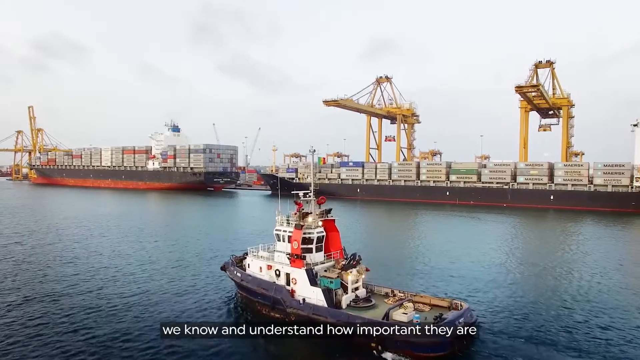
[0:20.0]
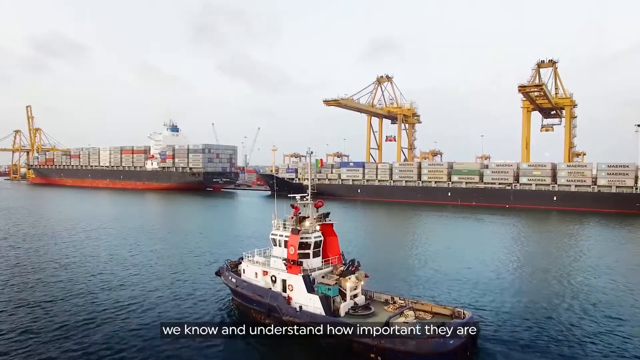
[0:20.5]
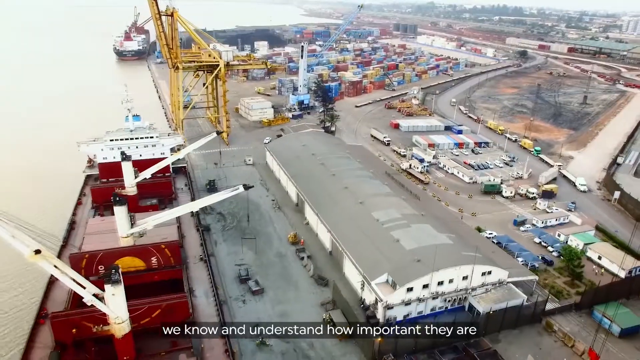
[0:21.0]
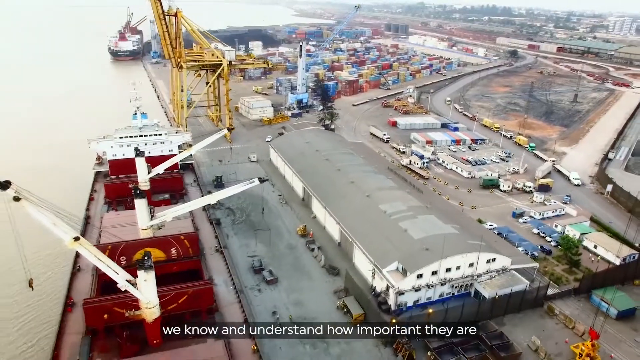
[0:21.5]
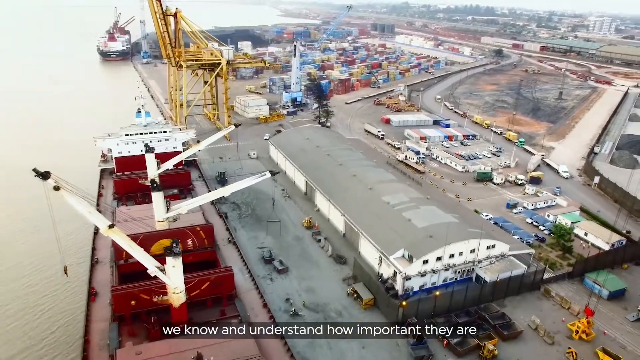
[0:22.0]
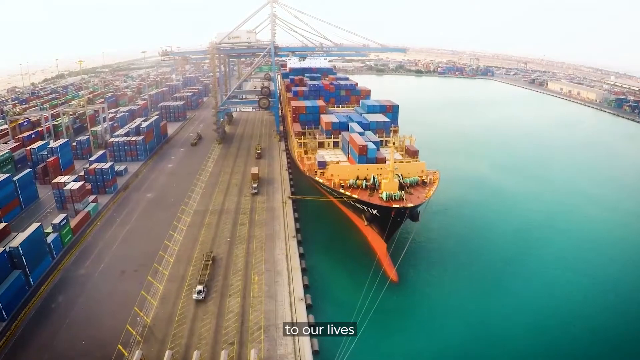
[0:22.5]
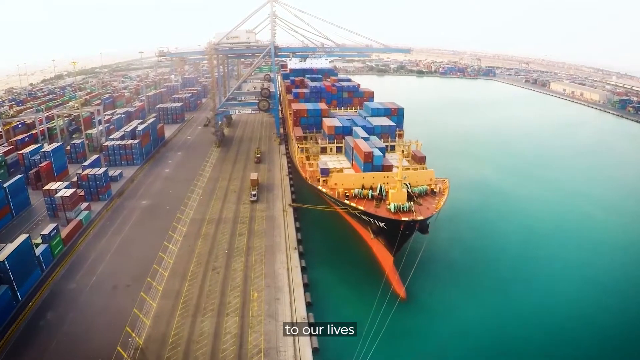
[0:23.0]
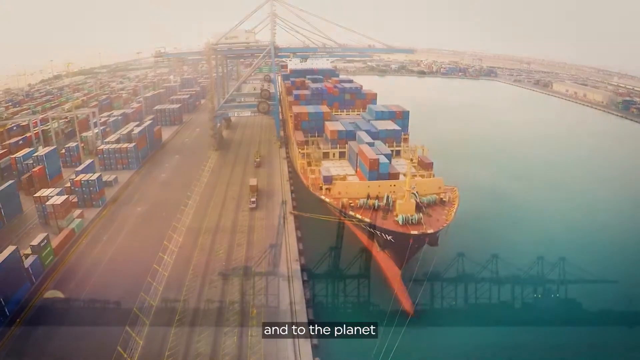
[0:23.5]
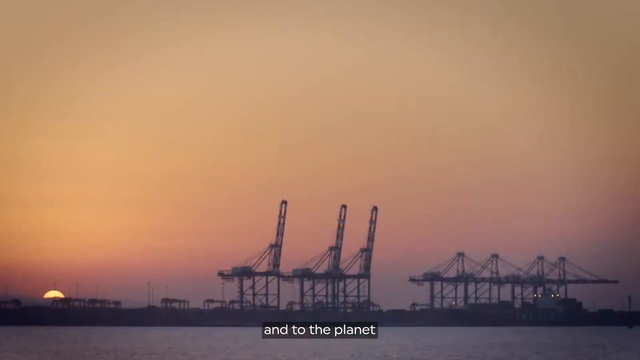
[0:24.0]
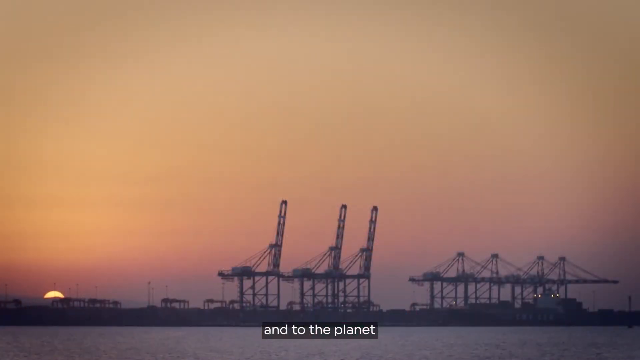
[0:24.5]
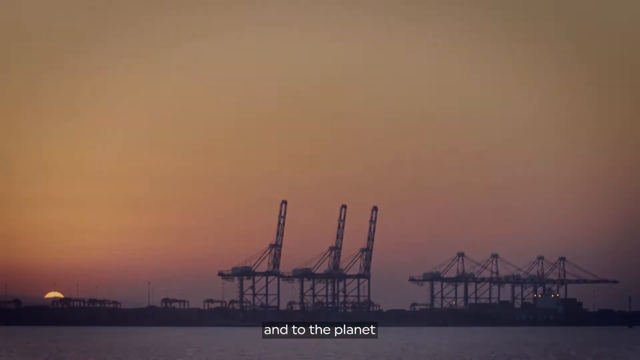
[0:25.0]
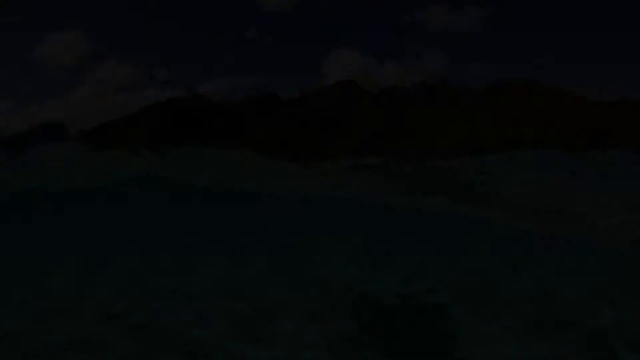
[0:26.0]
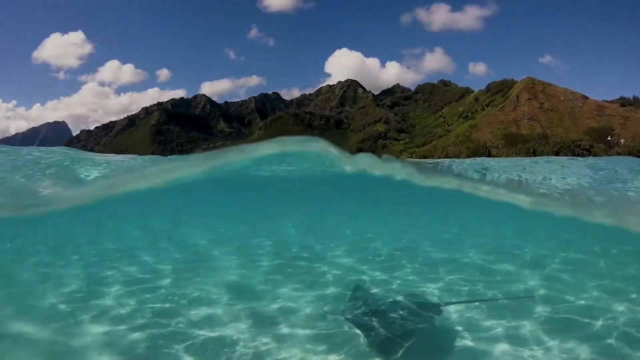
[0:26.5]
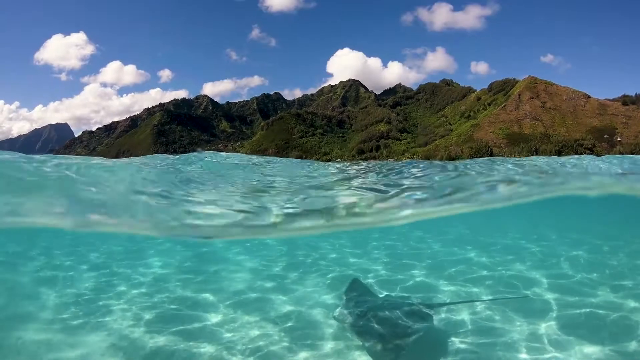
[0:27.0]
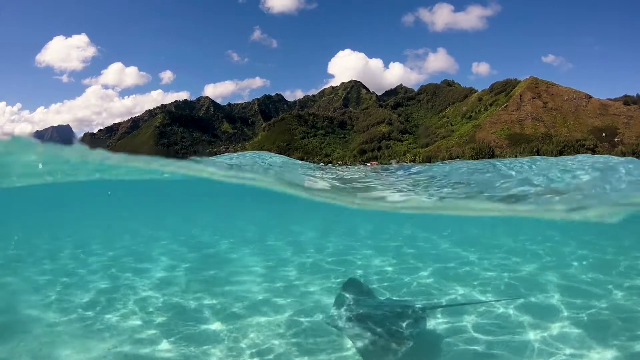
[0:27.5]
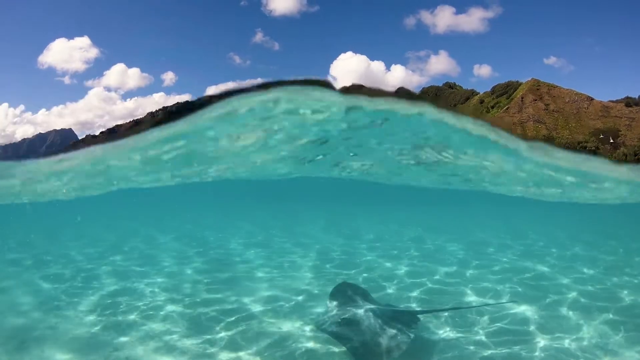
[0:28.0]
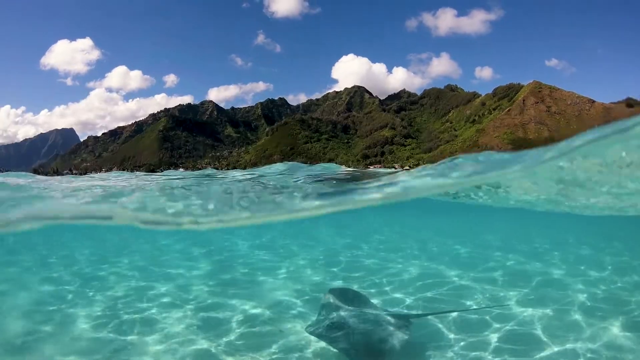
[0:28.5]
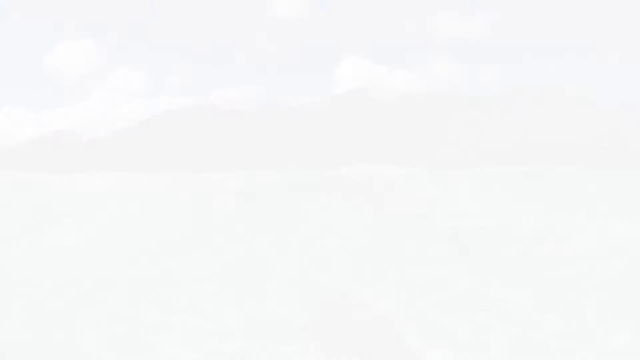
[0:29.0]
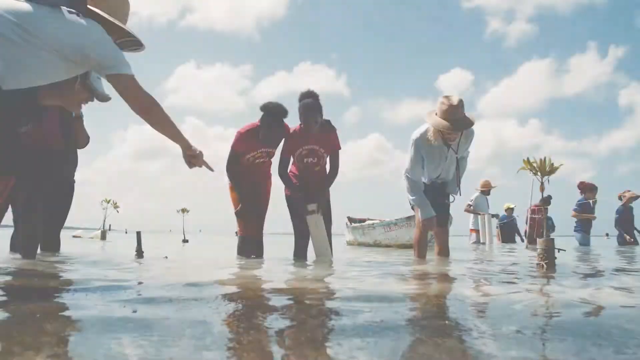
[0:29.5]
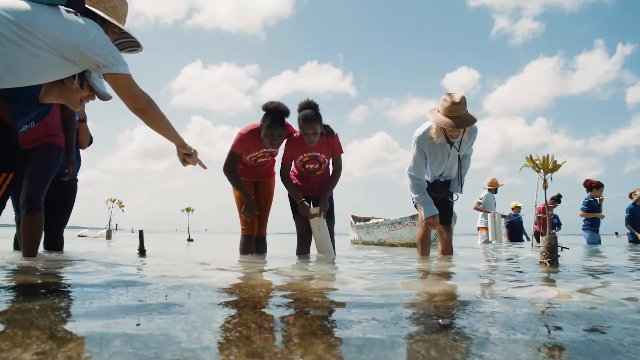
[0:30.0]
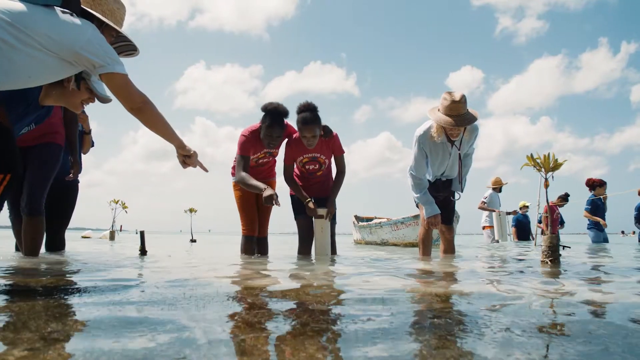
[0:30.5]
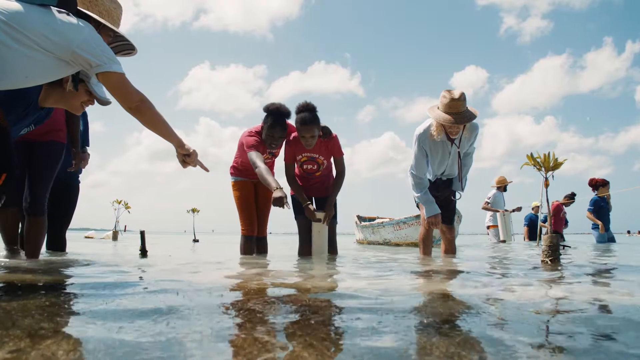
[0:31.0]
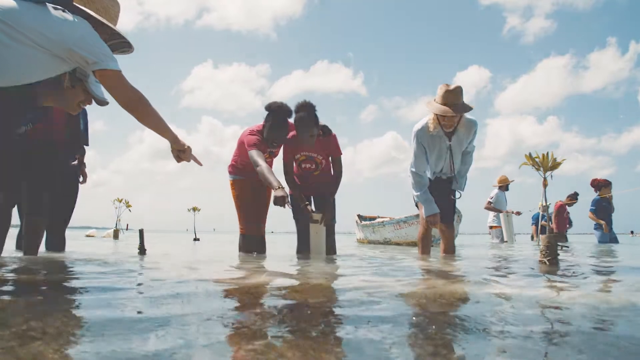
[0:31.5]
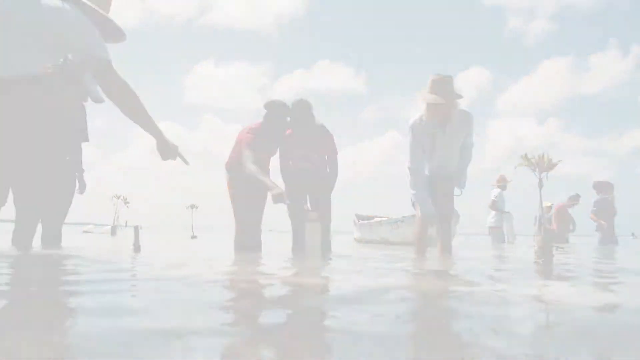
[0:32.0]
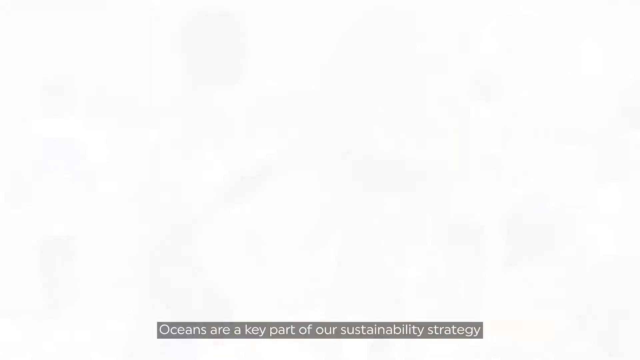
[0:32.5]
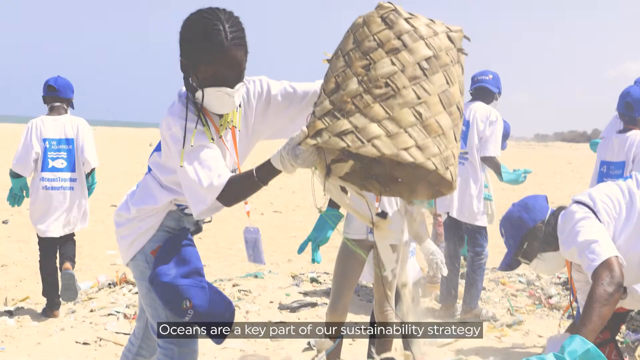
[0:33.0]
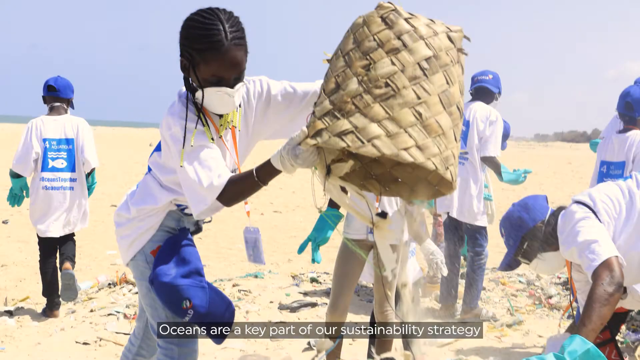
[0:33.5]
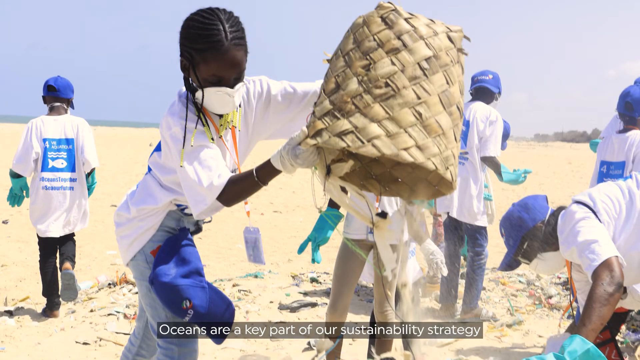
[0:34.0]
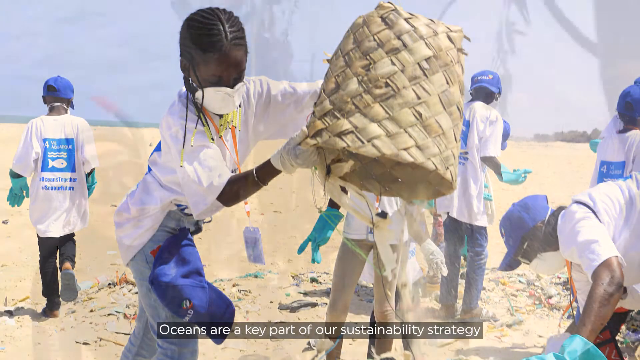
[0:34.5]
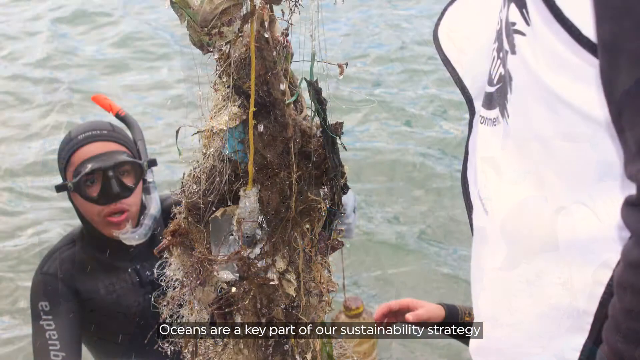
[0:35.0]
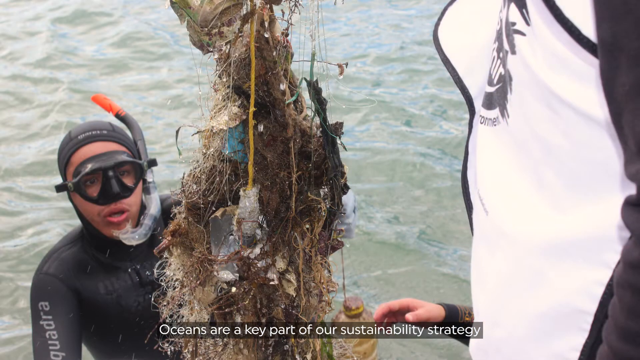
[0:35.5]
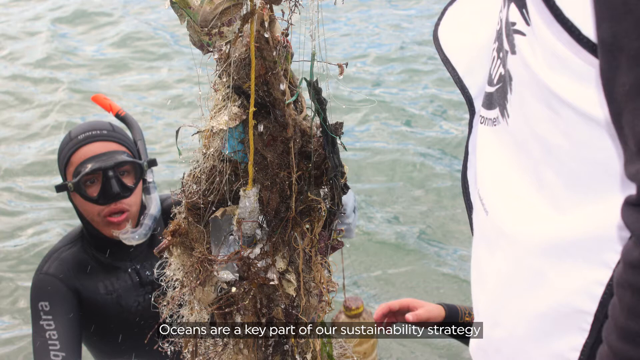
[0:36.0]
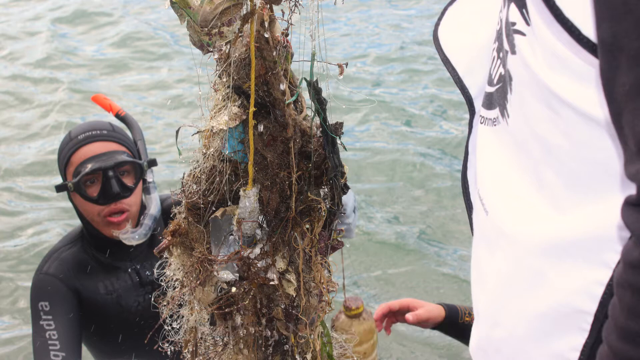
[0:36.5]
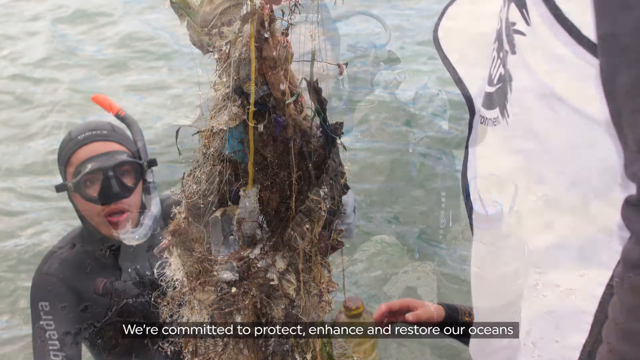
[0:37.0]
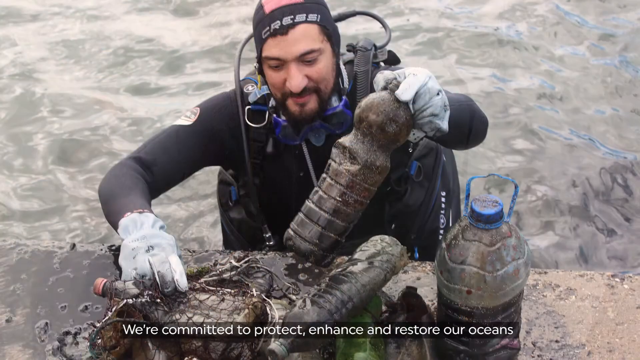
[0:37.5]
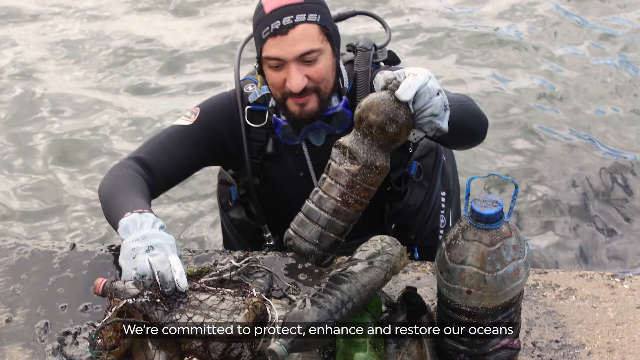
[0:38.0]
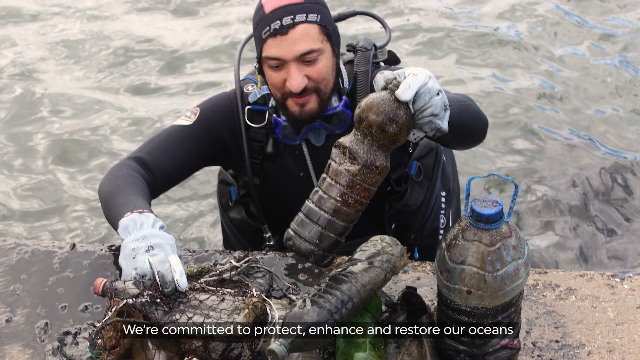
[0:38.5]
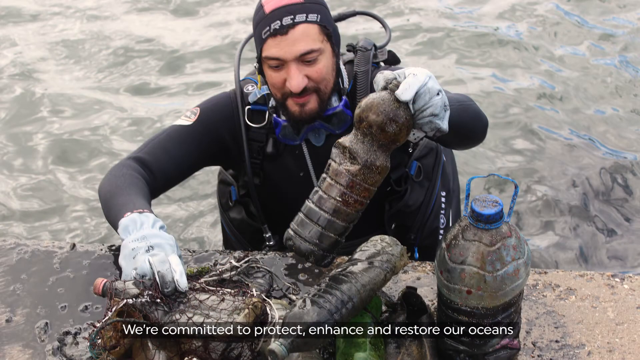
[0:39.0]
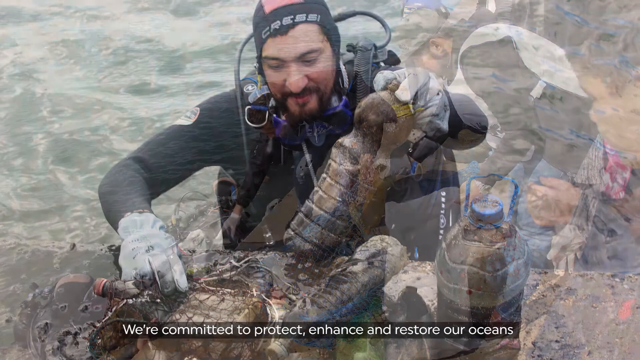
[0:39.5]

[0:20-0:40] A series of short videos and stills about the docks and the sea follows. The view of the dock moves out to show what lies behind it: containers, trucks, roads and the town further back. This immediately changes to a second dock scene, with a large colourful ship in the centre at the side of the dock, looking ready for loading or unloading. Next is a picture of oil rigs or cranes against a red sun background. These three pictures are stills; then comes moving footage of gentle waves rolling across granite or volcanic rock, clear enough to see through to the sandy bottom below. The waves move from left to right until the shot fades to a picture of about 12 people with boats. One person on the left points their right index finger towards the water, someone else has a machine in the water and bends down to look at it, and others bend as if searching the bottom of the water. After several seconds this is replaced by children in blue caps and white t-shirts with a fish logo, apparently collecting and finding things on the beach. Then a series of still shots shows a diver in the centre of the screen collecting something from the bottom of the water and smiling at the camera.